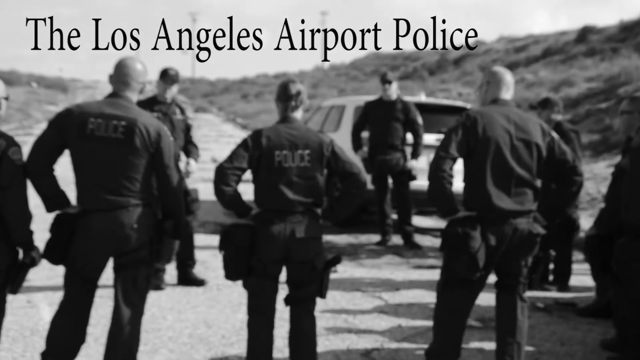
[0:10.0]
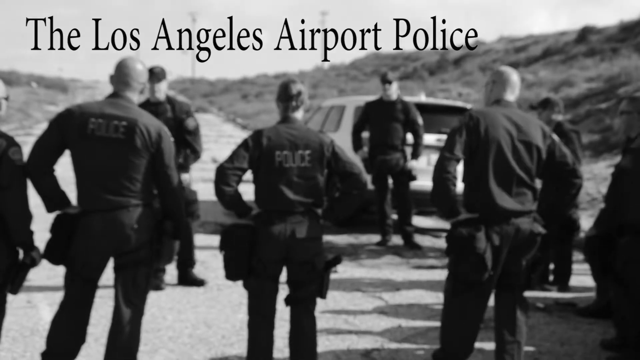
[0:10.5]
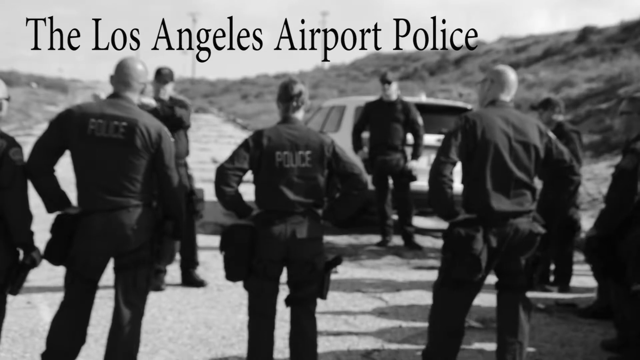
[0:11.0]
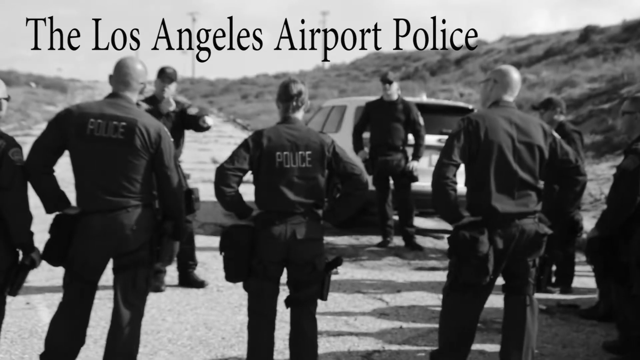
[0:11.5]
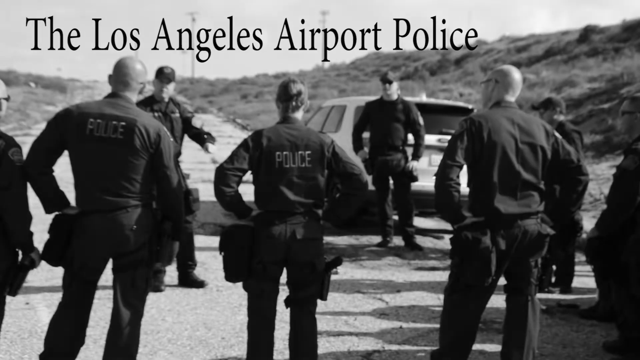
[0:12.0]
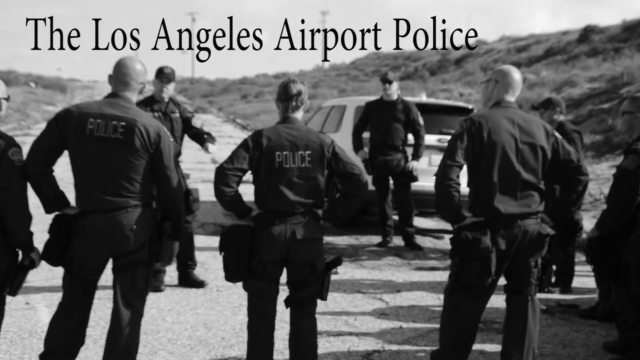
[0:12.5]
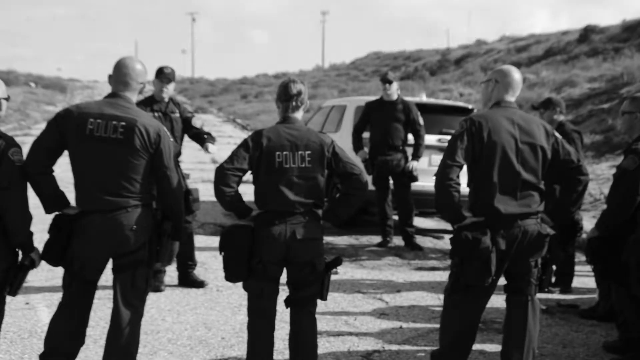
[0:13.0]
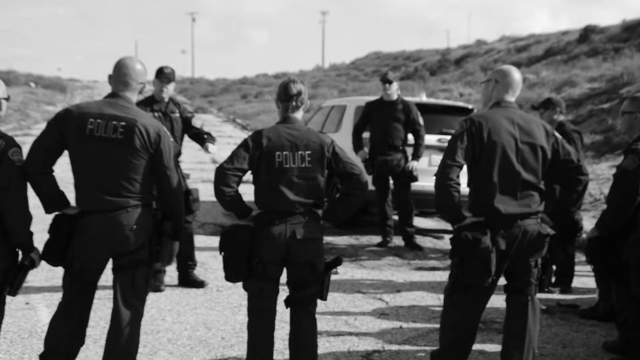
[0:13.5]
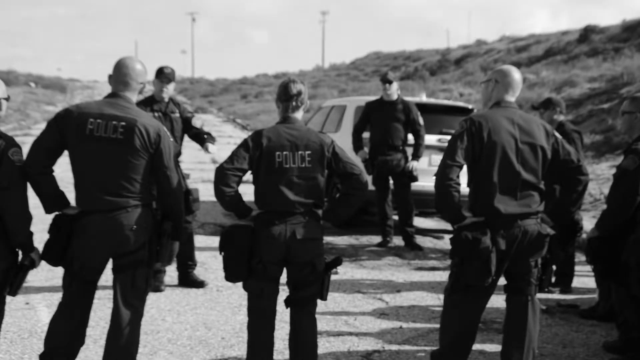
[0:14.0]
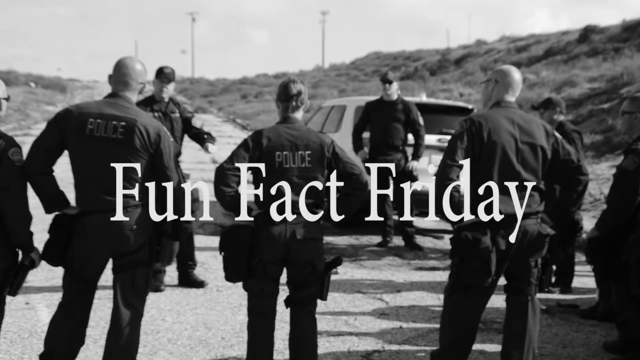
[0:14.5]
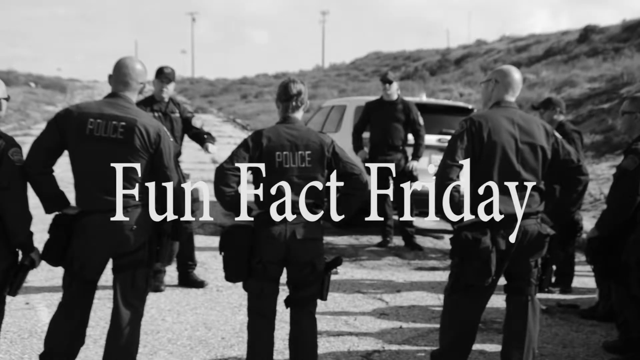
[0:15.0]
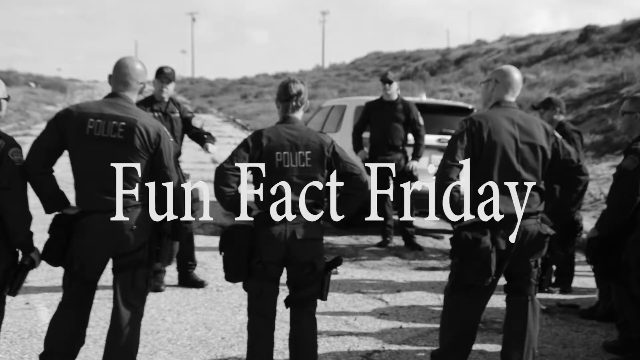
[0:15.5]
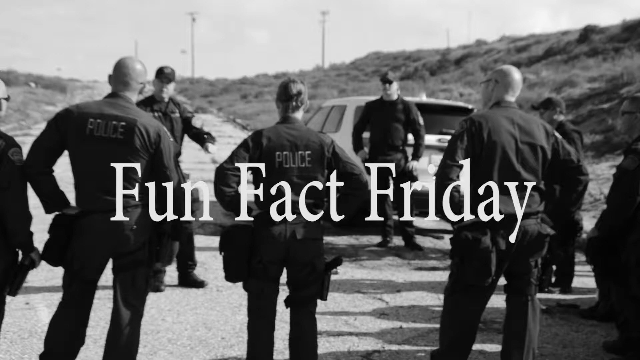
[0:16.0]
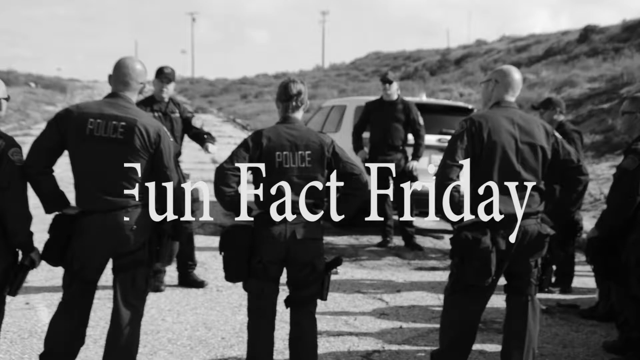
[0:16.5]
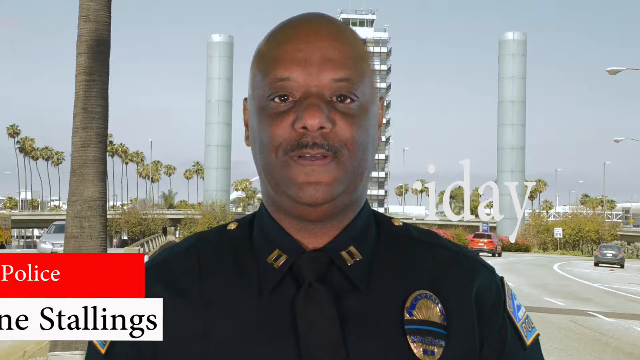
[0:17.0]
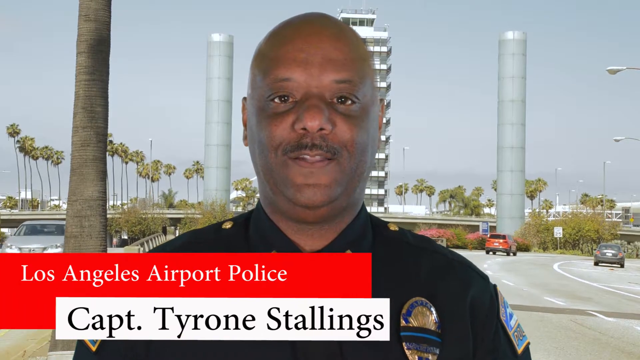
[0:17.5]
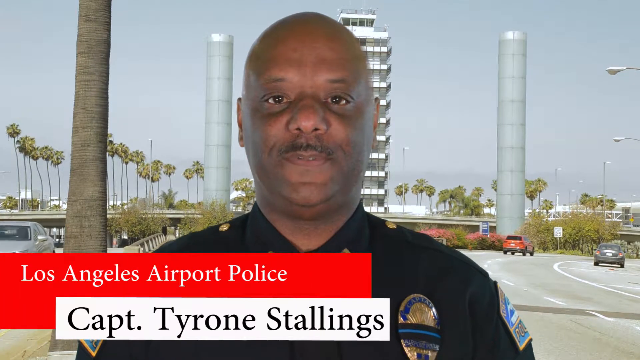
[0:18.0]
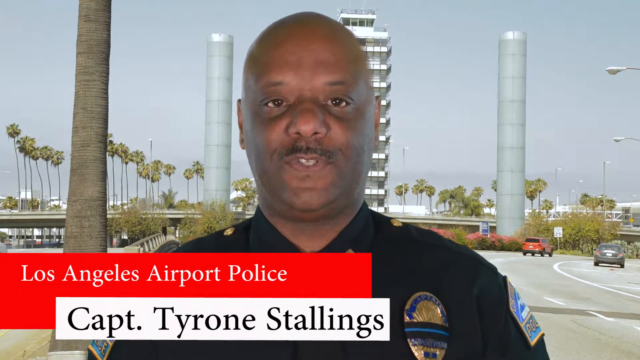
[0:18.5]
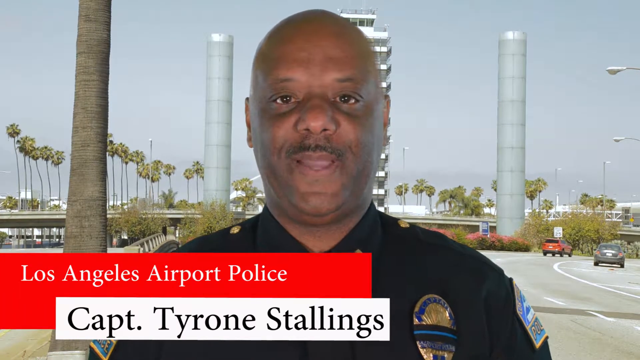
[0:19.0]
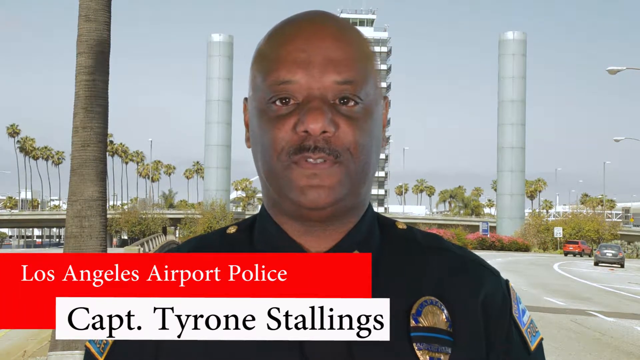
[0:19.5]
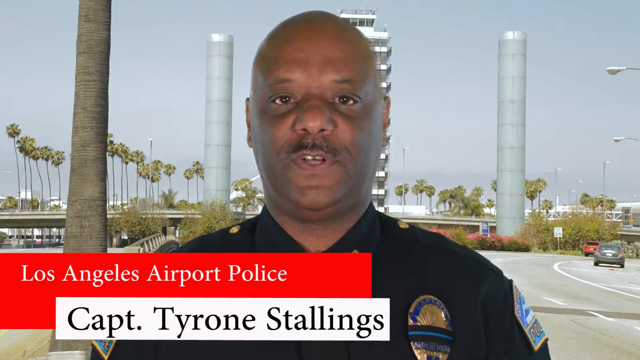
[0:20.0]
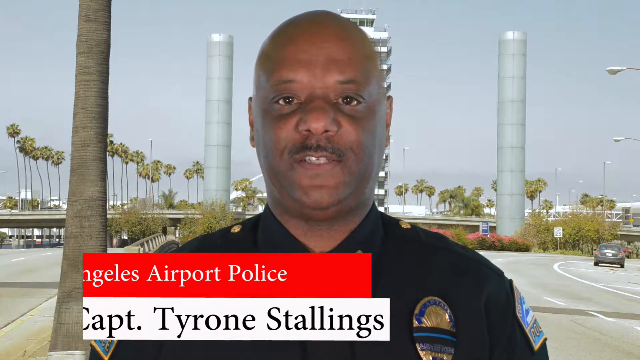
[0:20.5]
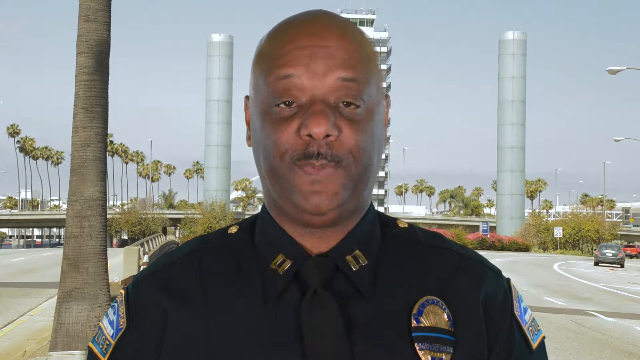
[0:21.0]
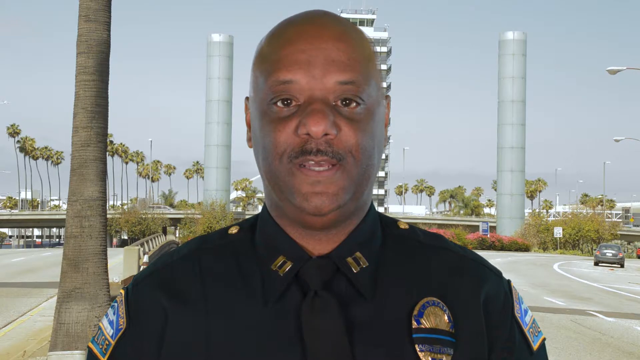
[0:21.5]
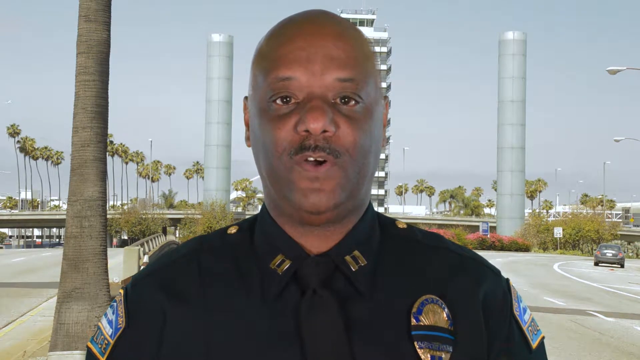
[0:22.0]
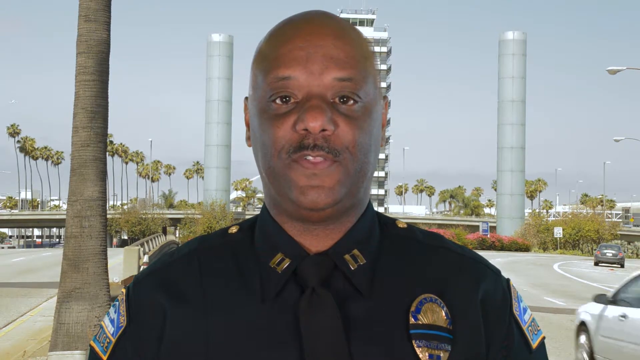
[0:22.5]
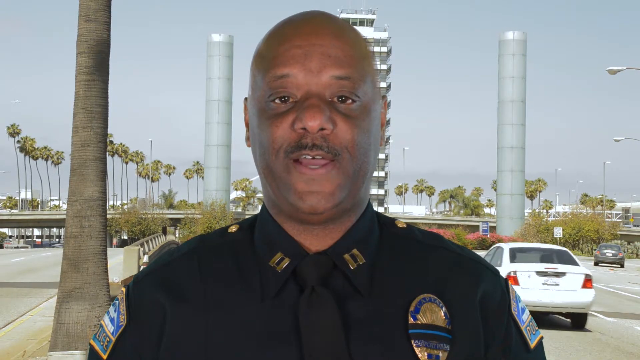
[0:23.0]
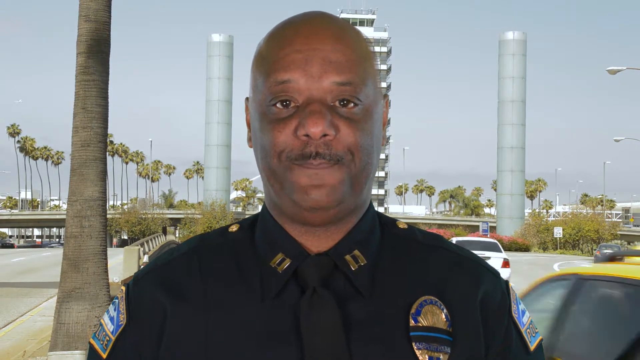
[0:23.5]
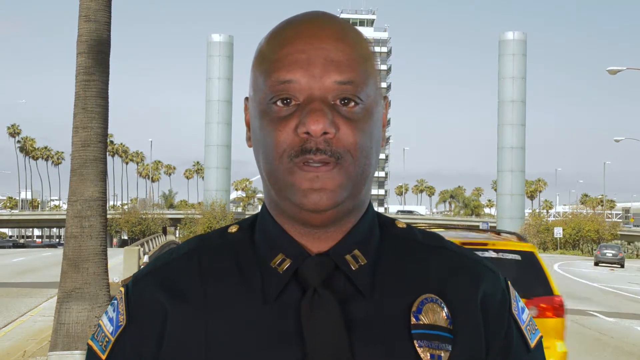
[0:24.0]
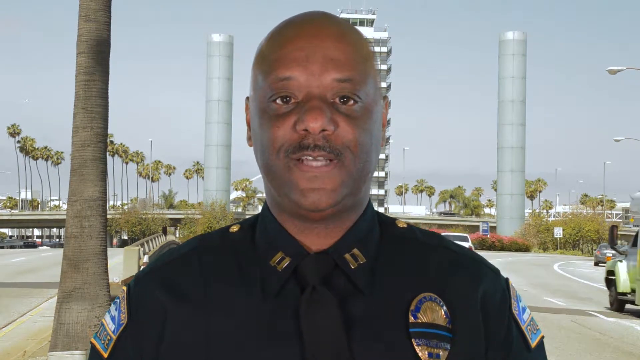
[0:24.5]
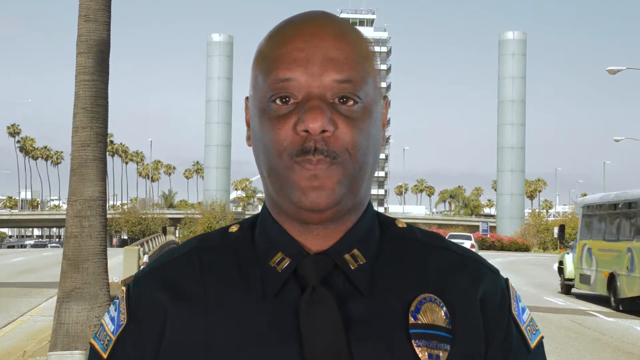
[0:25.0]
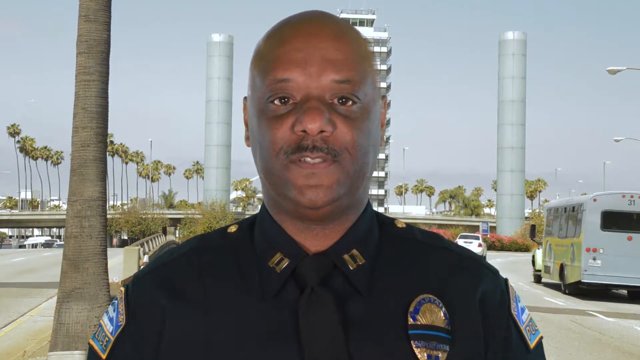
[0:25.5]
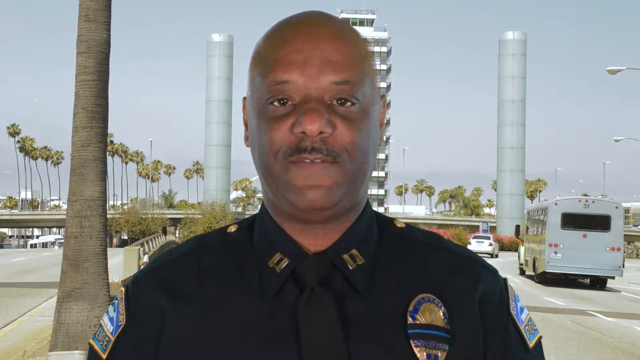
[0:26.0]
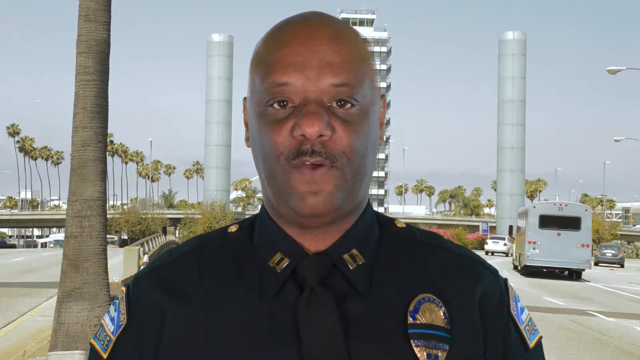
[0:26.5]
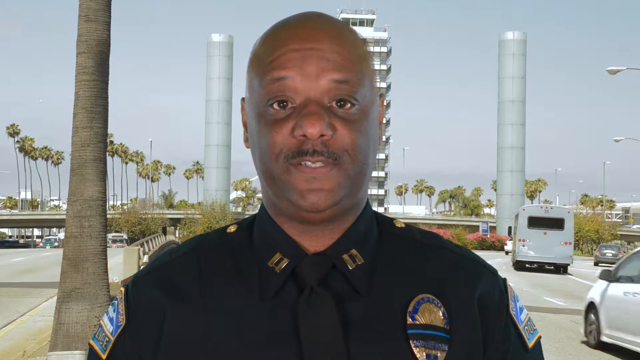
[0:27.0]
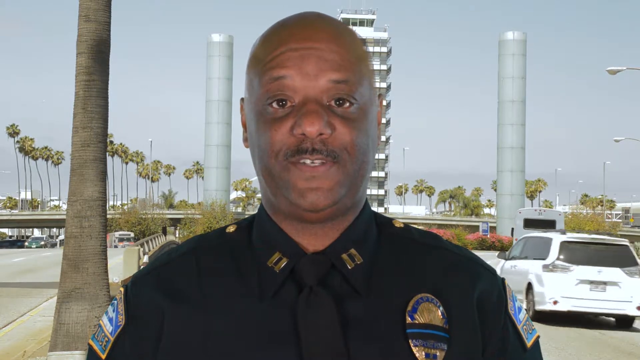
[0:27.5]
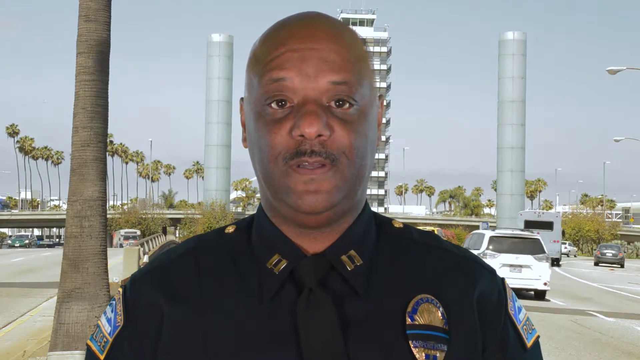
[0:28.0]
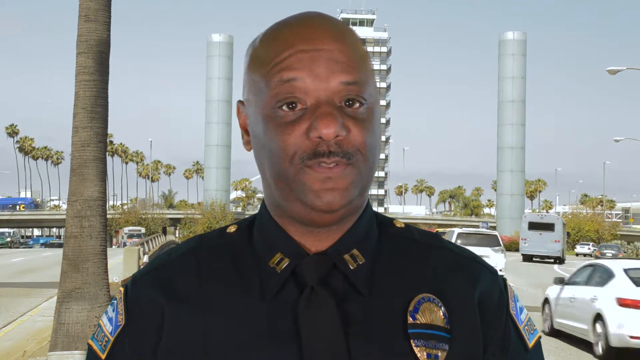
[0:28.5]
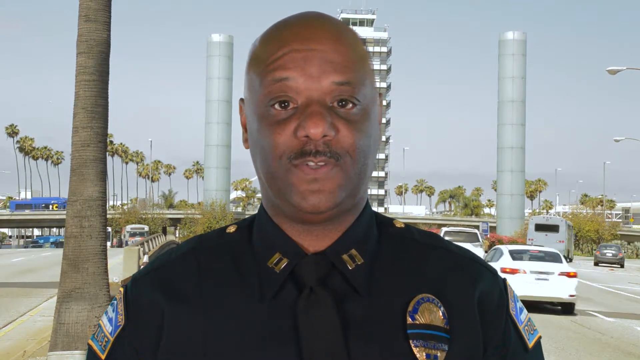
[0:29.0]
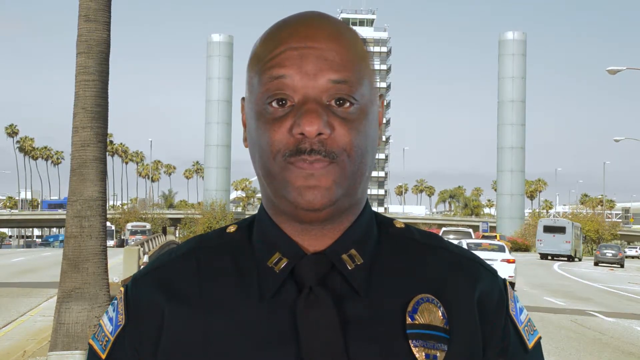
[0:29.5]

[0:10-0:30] The police officers, all dressed in black and some wearing caps, stand on the road with their hands akimbo as an officer in a cap addresses them and gesticulates. A white SUV is behind them, and a lawn and a hill are on the right of the screen. Text in white appears on the screen reading "fun fact friday". The video then cuts to a clean-shaven police officer with a very small mustache, alongside a banner reading "Los Angeles airport police" in white on a red background and his name, "captain Tyrone Stowells", in black on a white background. Behind him are a tree trunk, lots of swaying palm trees, two poles, a high-rise building, and a highway with vehicles at the bottom right of the screen, one red and one black. The officer's lips move; he wears a black uniform with the top button buttoned up. Two vehicles drive by, a white vehicle alongside a yellow vehicle at the back, and a bus drives by.